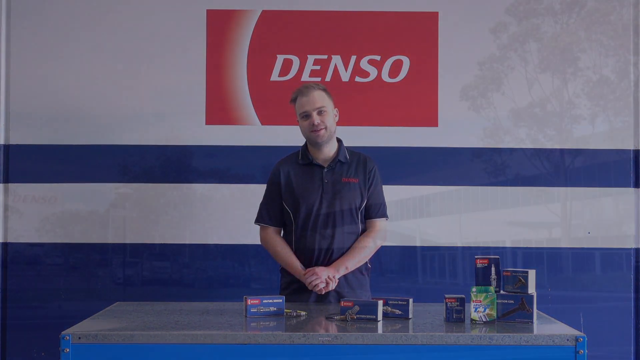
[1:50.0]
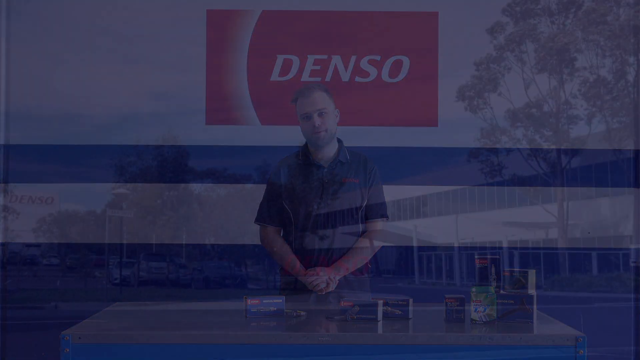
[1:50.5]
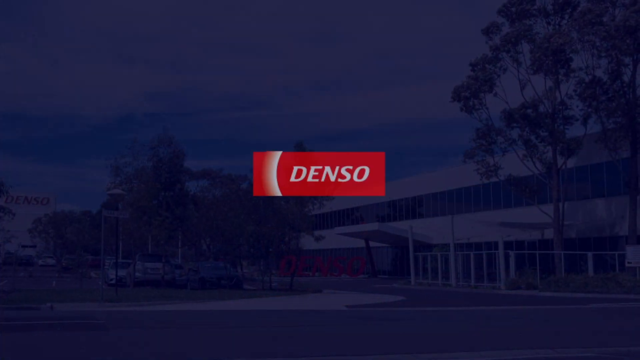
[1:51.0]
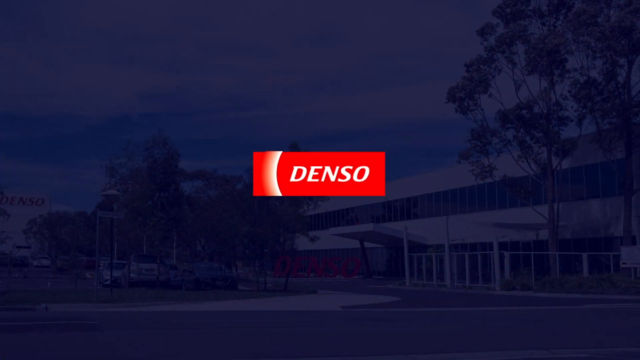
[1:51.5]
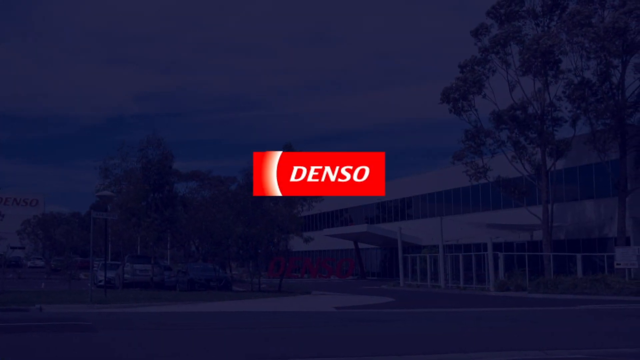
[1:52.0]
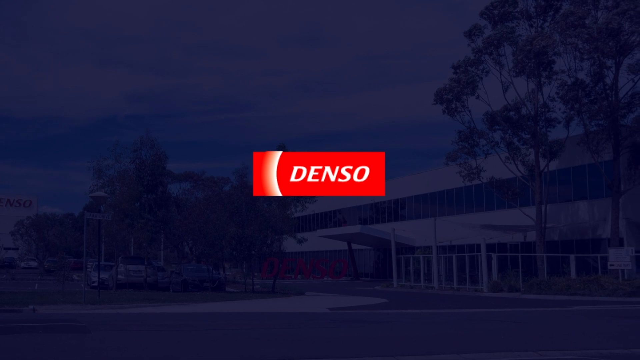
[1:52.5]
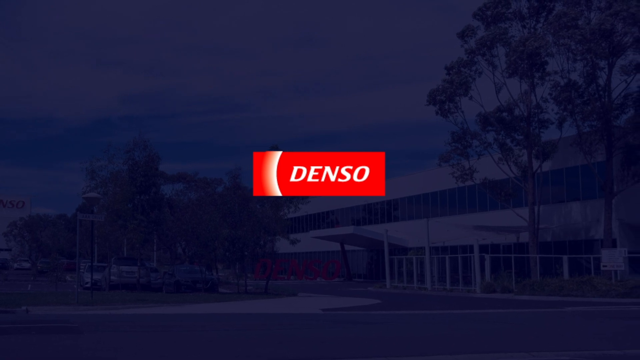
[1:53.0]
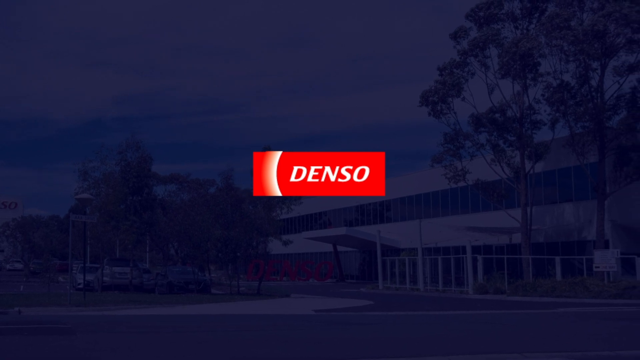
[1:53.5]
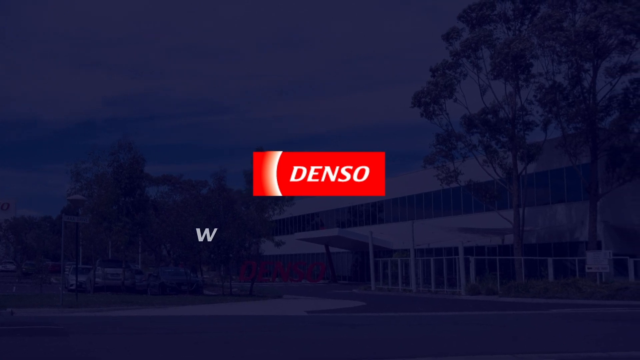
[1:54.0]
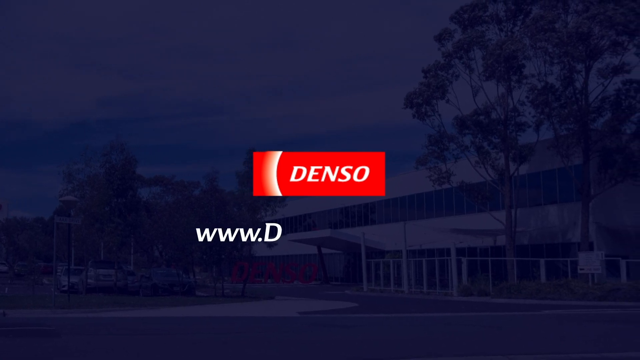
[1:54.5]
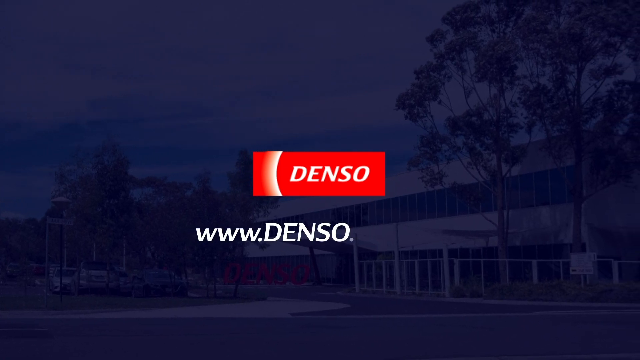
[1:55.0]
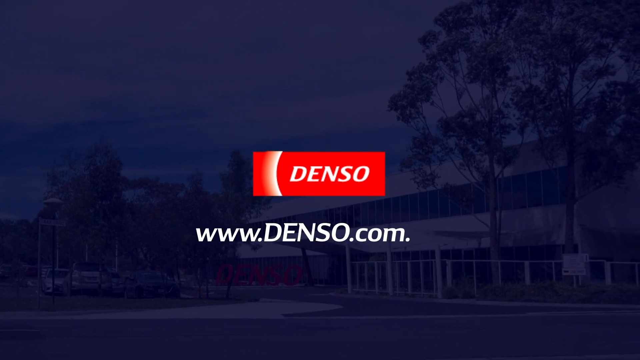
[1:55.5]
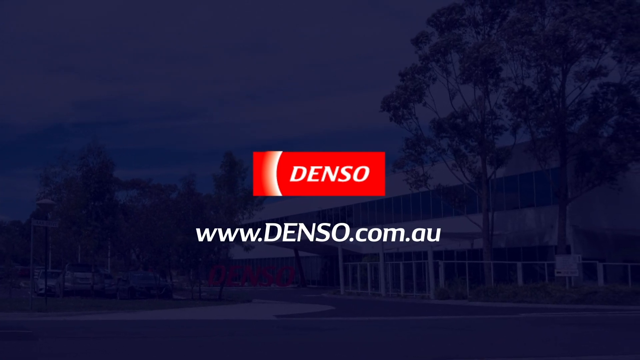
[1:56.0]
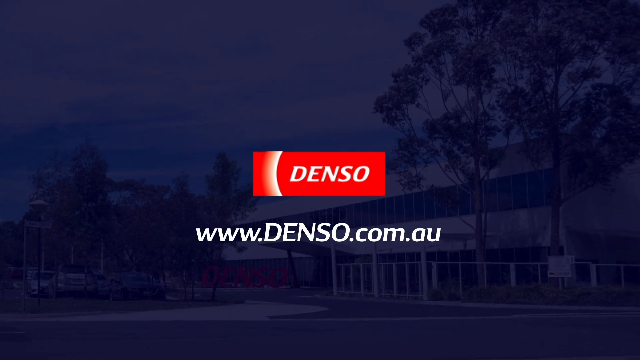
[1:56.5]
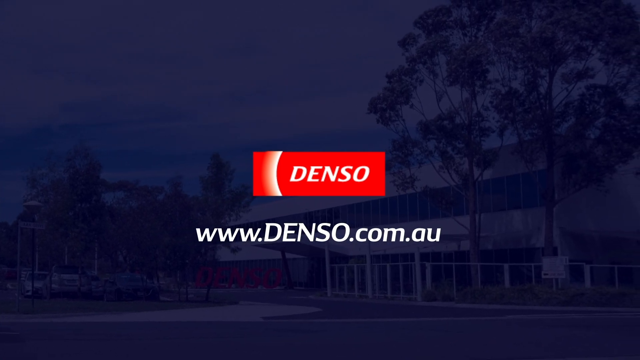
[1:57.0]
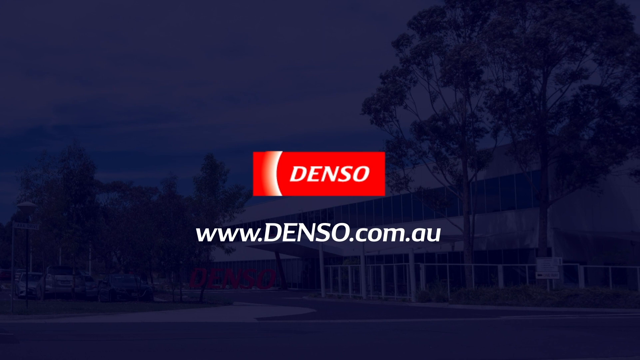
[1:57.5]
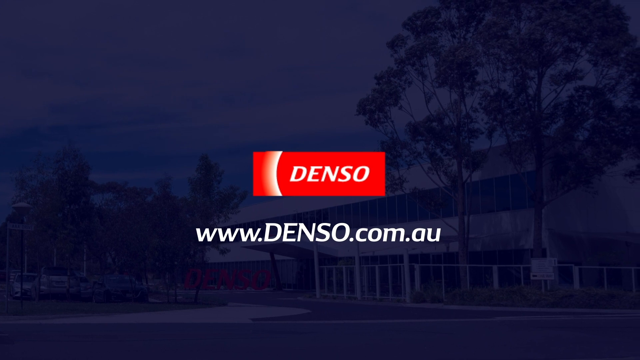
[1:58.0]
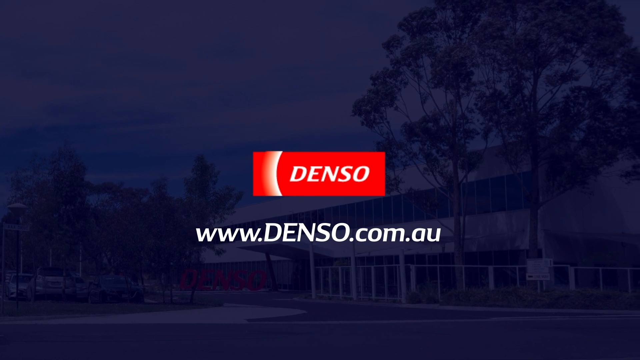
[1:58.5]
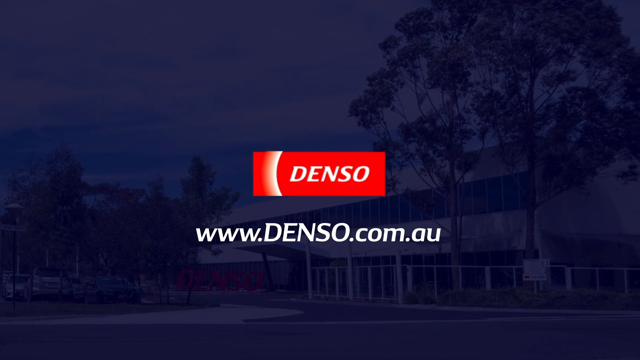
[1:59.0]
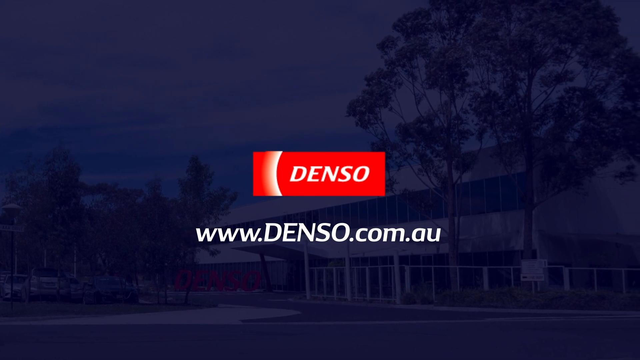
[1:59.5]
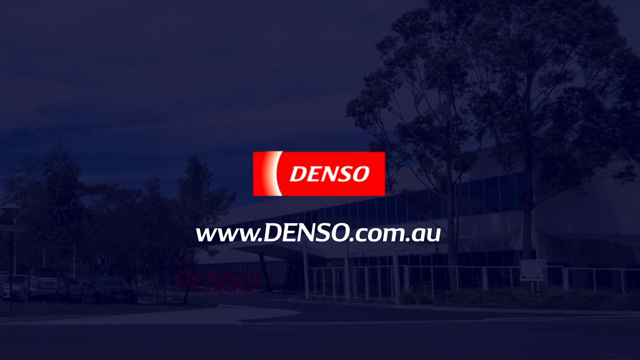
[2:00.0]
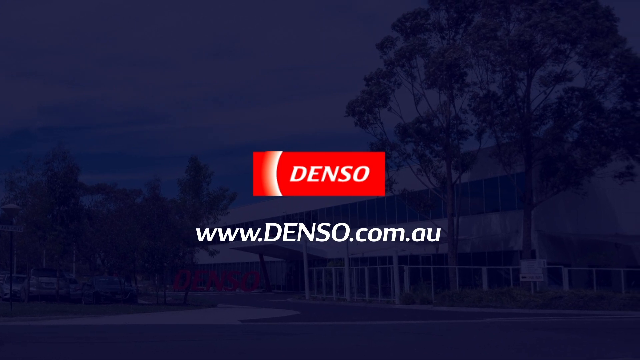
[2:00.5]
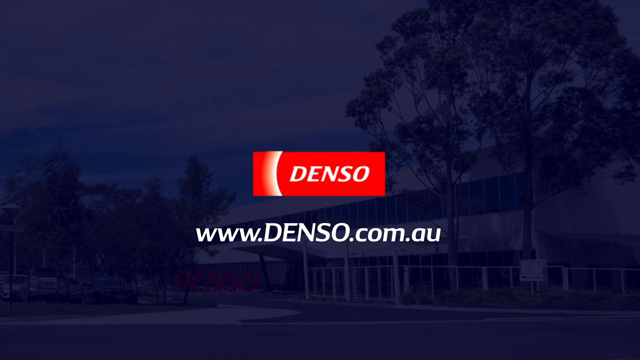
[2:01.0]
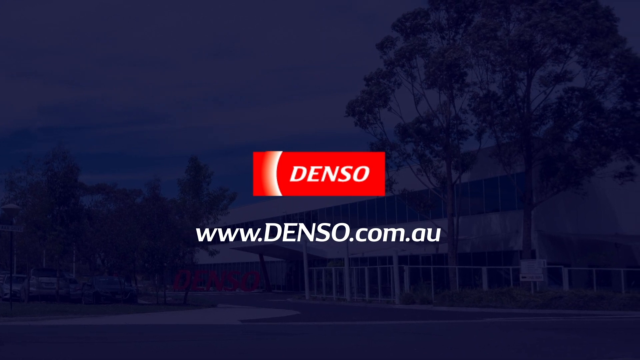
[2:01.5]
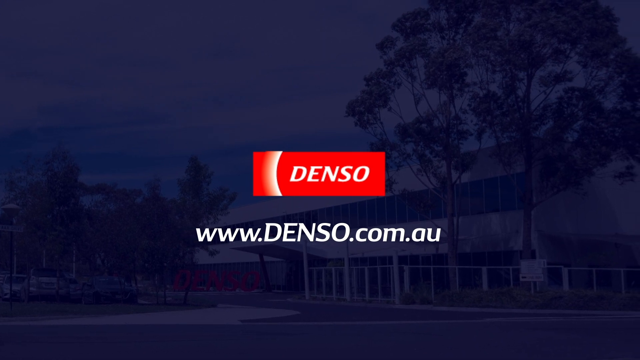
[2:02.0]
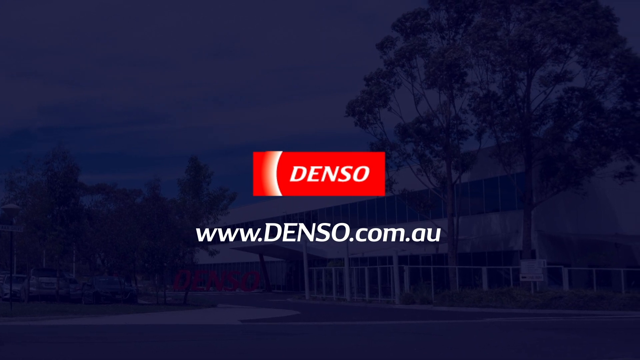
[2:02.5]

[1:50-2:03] The man wears the company shirt in the company colors, navy blue and red; the shirt is mostly navy blue and looks like it may have the company name on it. Then he goes off, and "DENSO" appears in all-capital white letters on a red background, as before. Underneath is the website "www.denso.com.au."